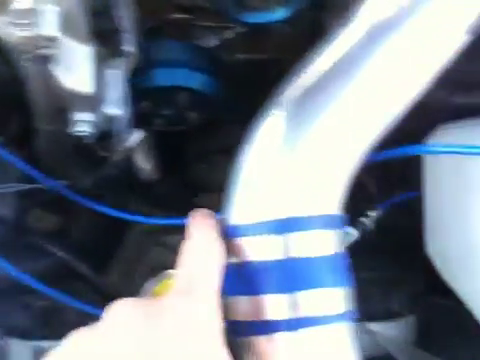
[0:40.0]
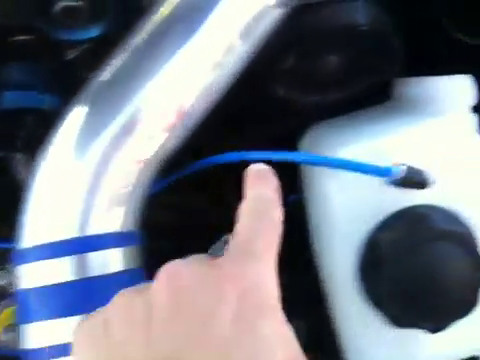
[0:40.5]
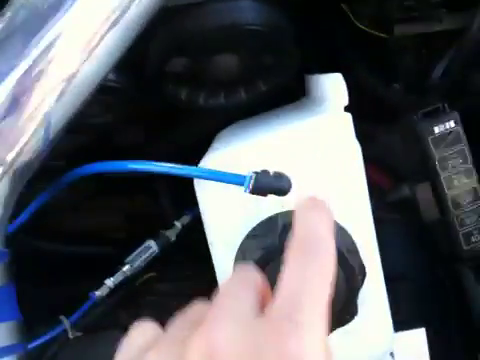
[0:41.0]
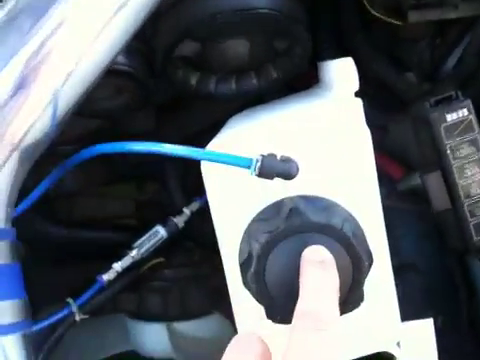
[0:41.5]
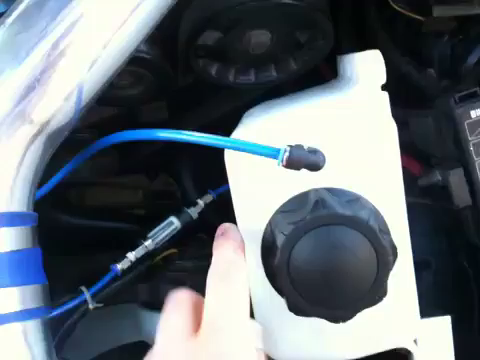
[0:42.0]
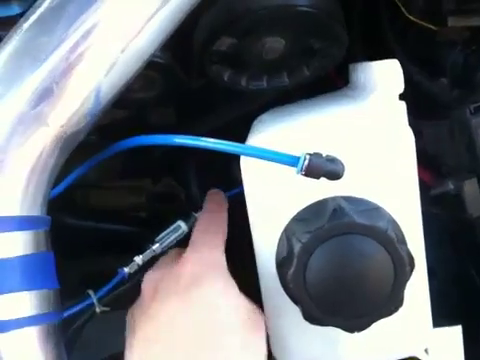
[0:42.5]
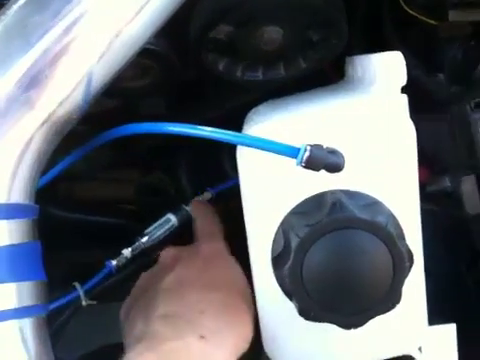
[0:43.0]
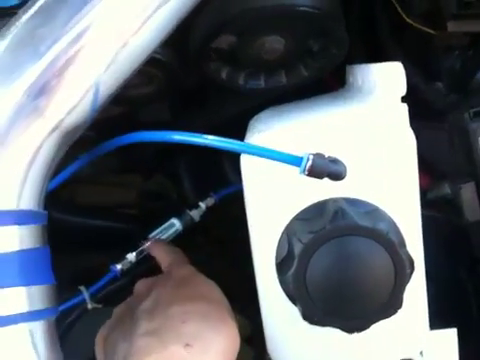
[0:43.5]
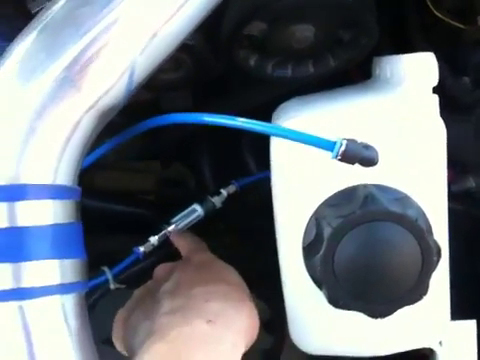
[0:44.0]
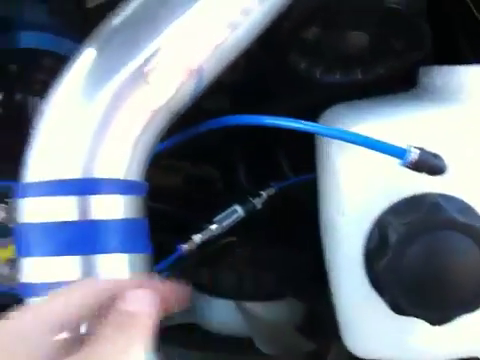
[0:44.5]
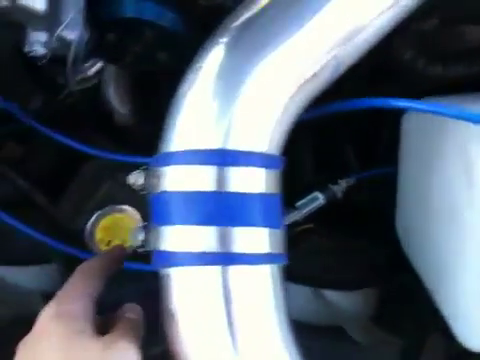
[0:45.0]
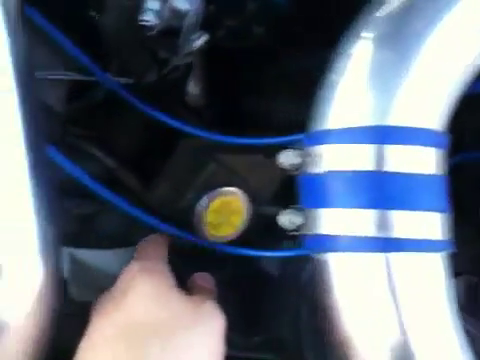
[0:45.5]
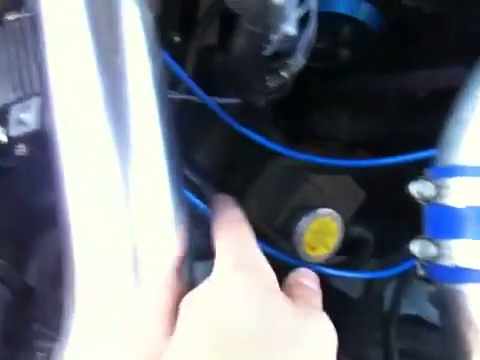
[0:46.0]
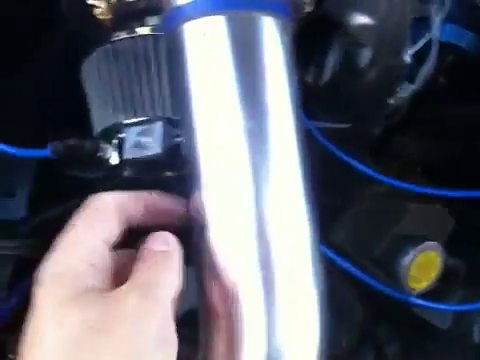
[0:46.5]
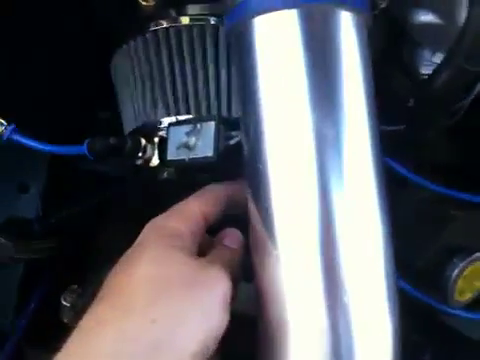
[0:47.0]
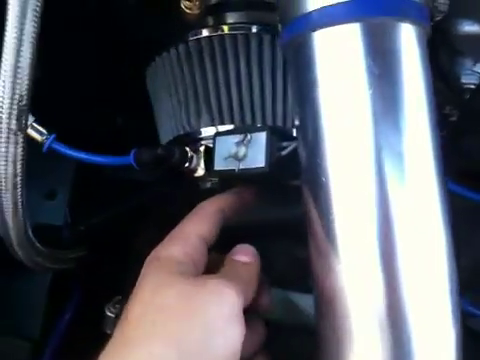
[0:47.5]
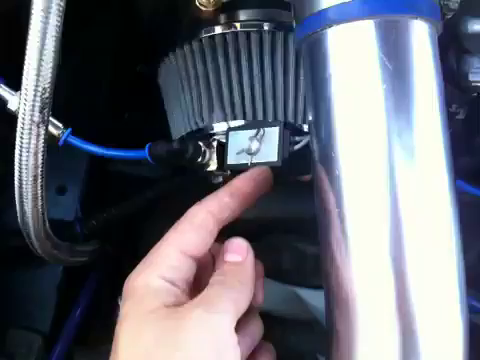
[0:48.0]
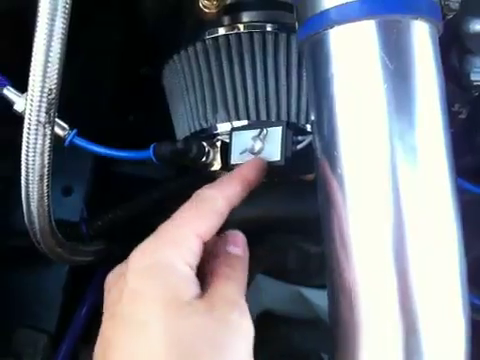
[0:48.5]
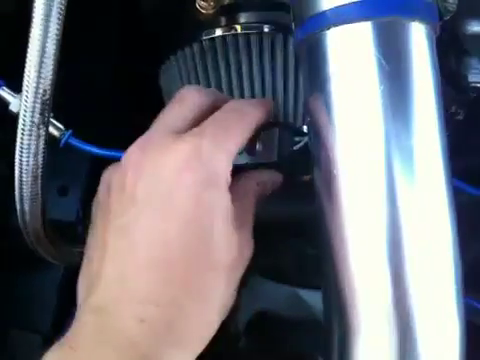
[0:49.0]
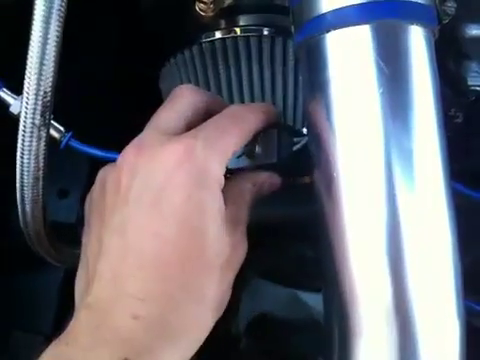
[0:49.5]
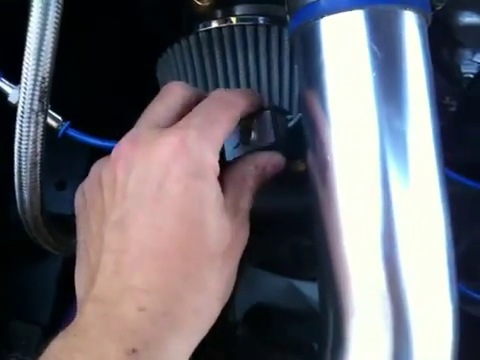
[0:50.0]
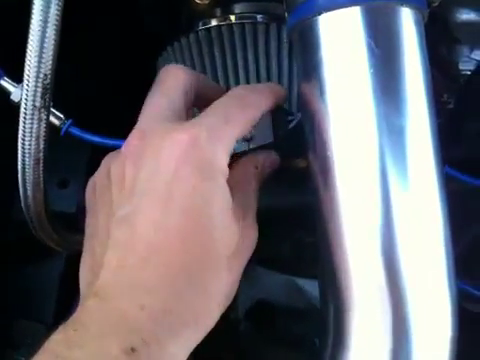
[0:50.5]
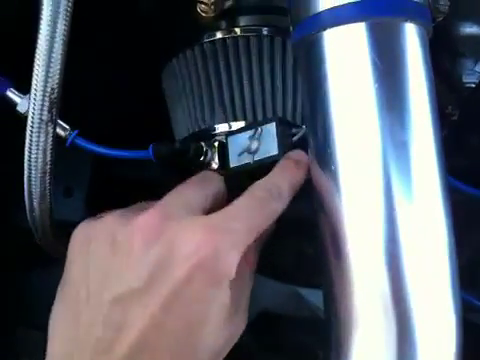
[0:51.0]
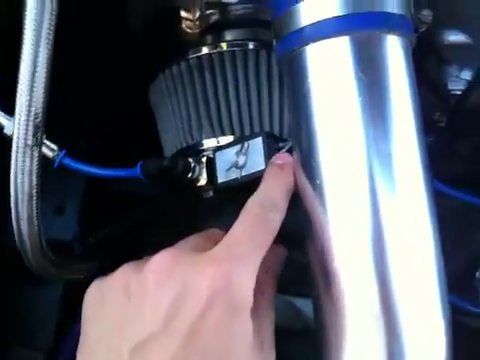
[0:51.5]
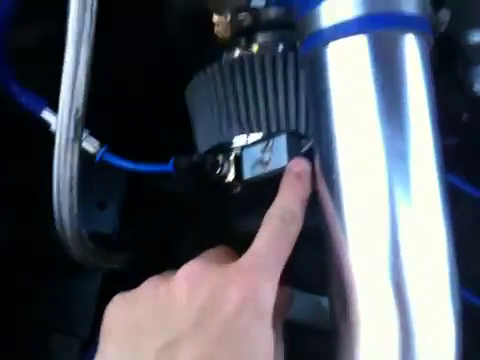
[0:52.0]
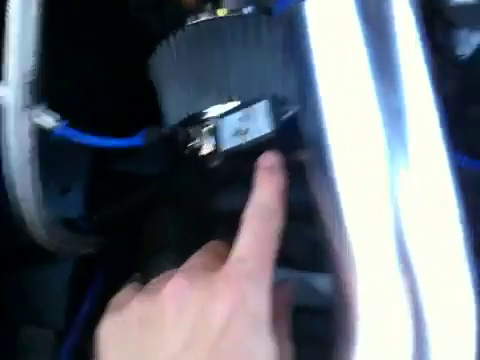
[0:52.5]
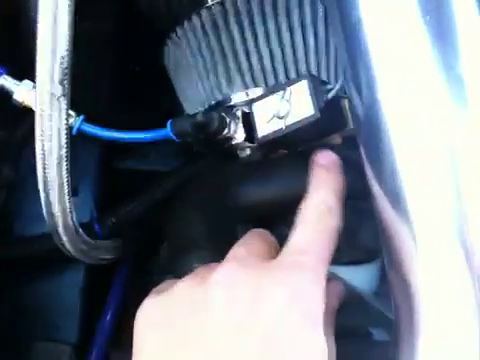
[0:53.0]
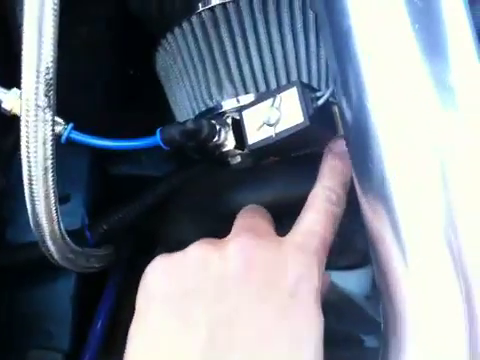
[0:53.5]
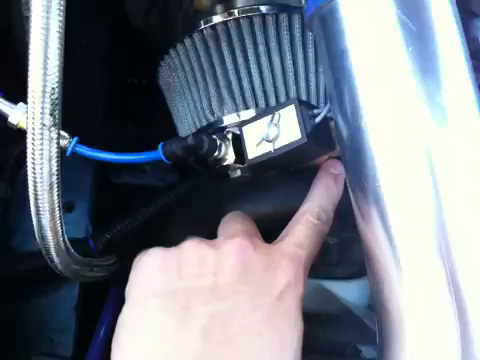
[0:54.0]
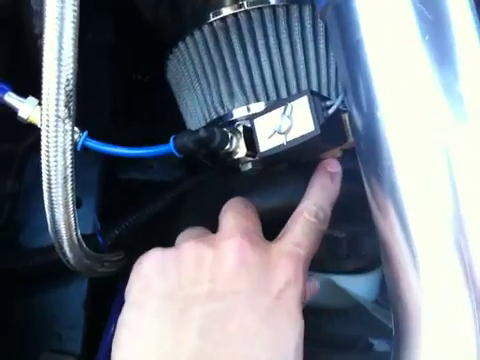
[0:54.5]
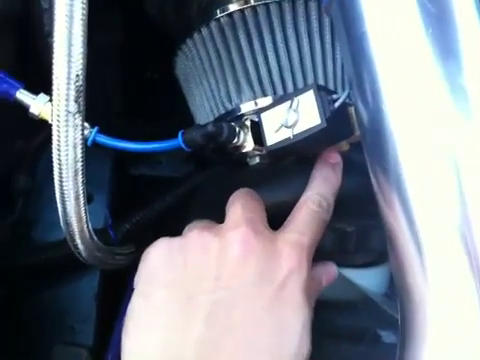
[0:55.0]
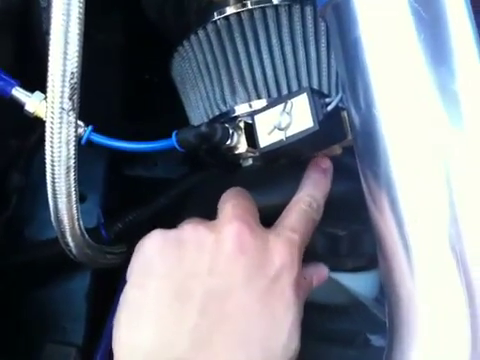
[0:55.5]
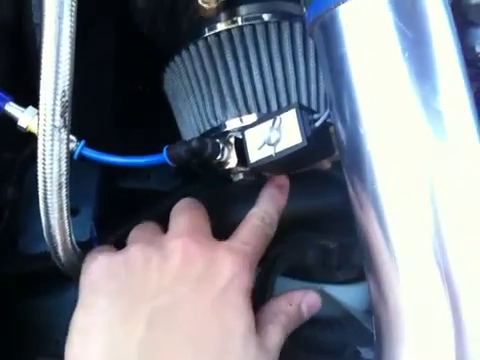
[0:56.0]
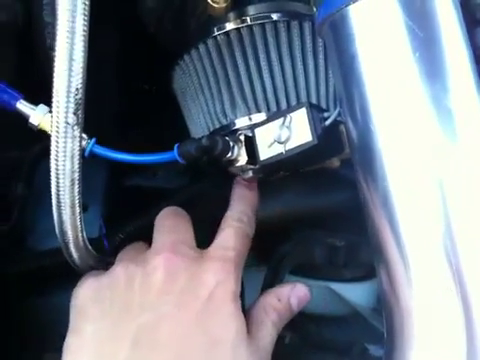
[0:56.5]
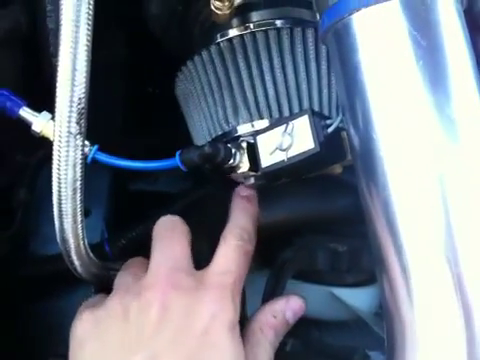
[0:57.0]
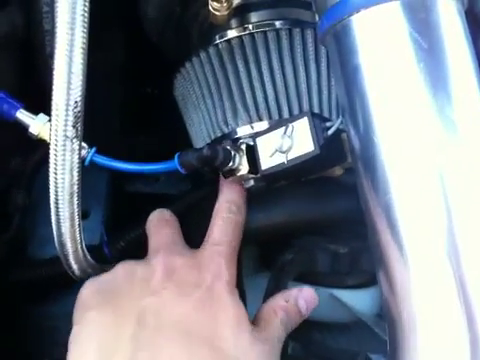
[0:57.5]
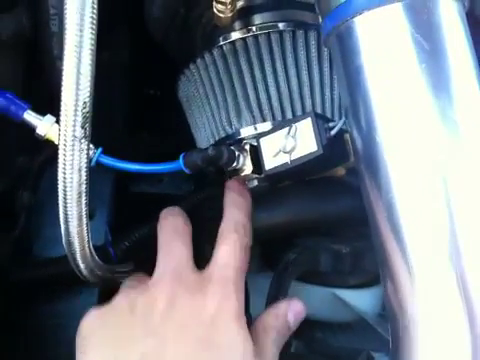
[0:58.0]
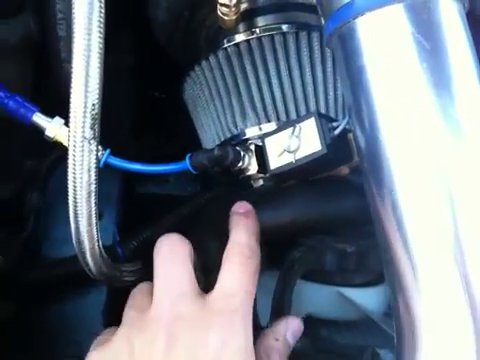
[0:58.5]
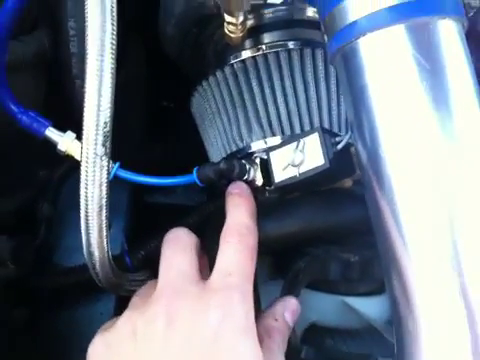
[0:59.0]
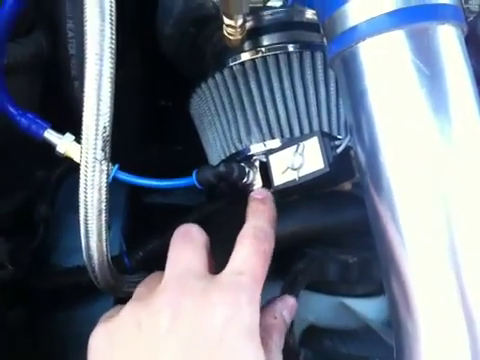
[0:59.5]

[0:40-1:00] The person keeps looking at the blue loop connected to the white bottled section at the bottom right of the vehicle; the white container has a black cap. Using the left index finger, the person traces the blue wire to where it connects to the white container. They then check another blue wire next to it and find that it leads to a section on the left side of the hood, where they touch different parts around the area with the left index finger. A large silver pipe is also in the hood.